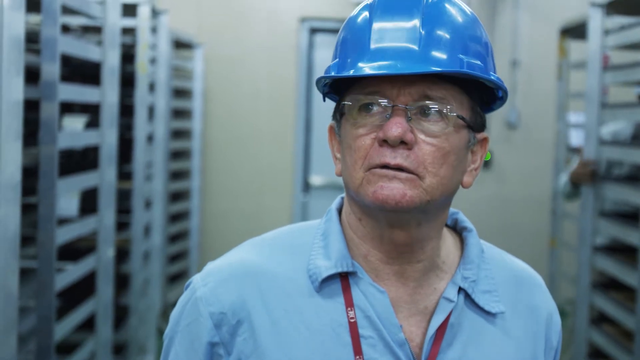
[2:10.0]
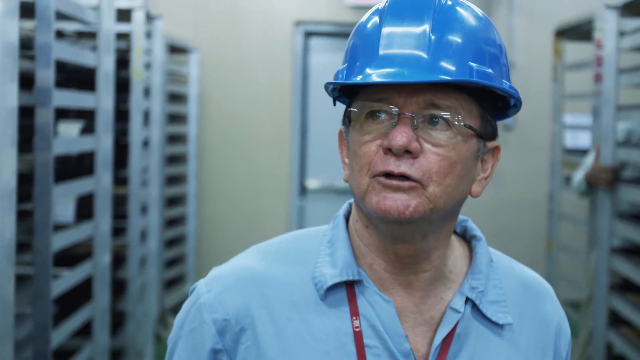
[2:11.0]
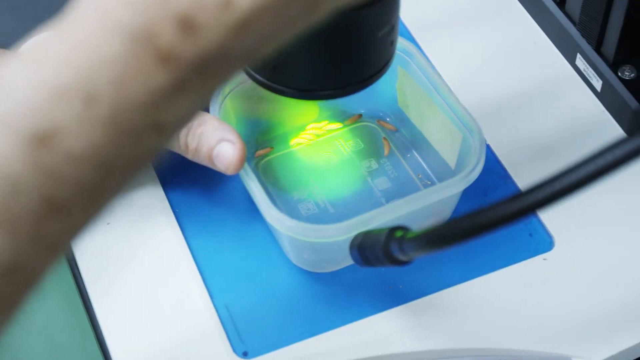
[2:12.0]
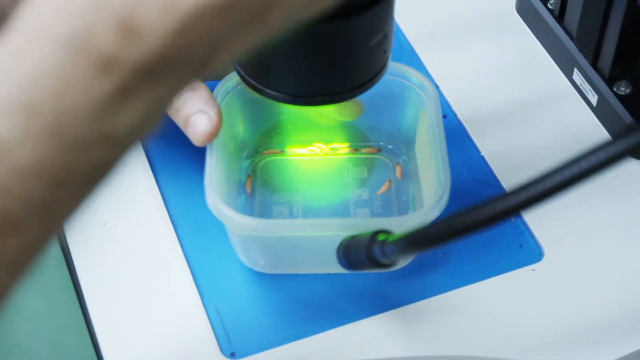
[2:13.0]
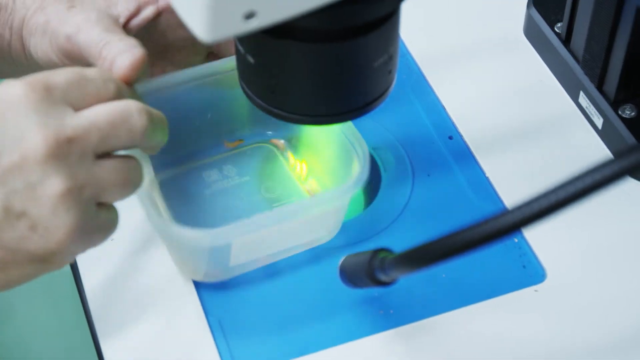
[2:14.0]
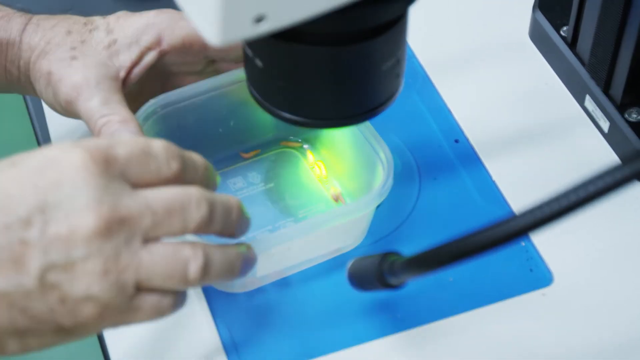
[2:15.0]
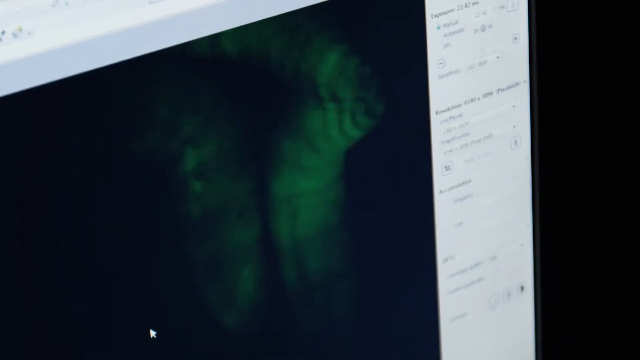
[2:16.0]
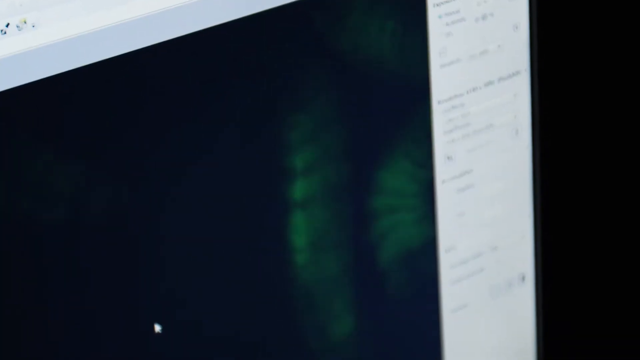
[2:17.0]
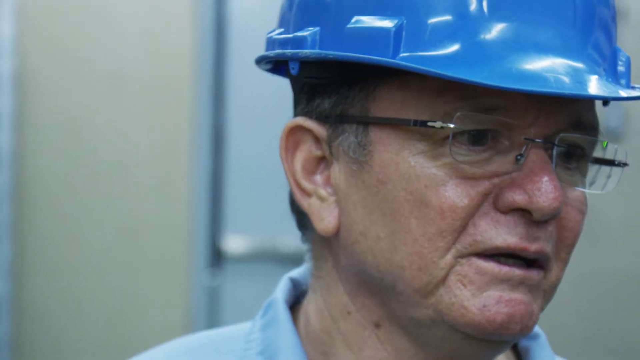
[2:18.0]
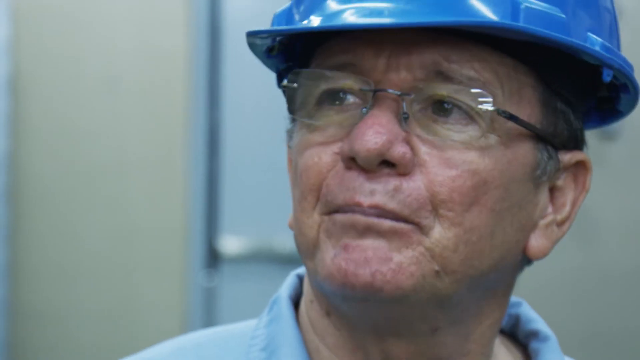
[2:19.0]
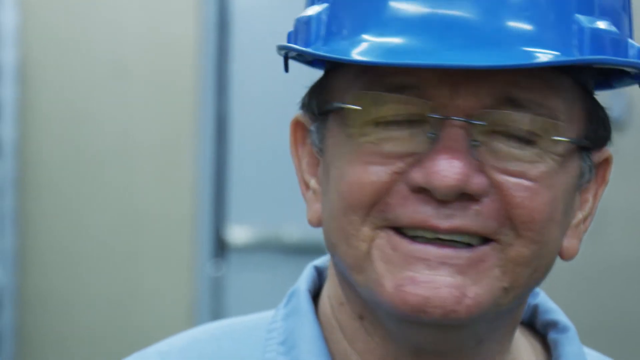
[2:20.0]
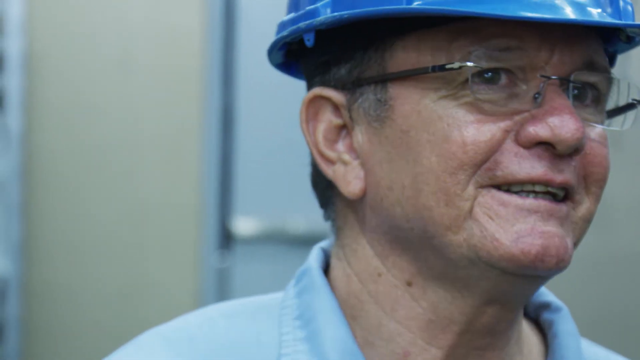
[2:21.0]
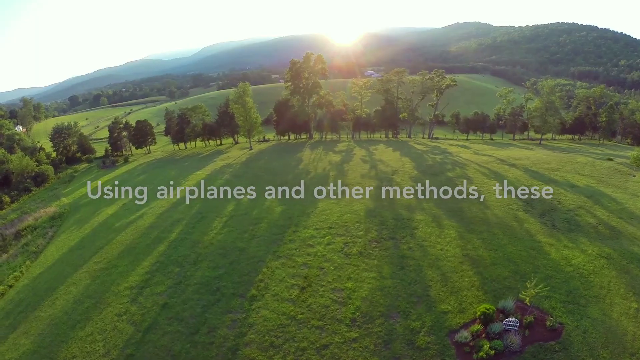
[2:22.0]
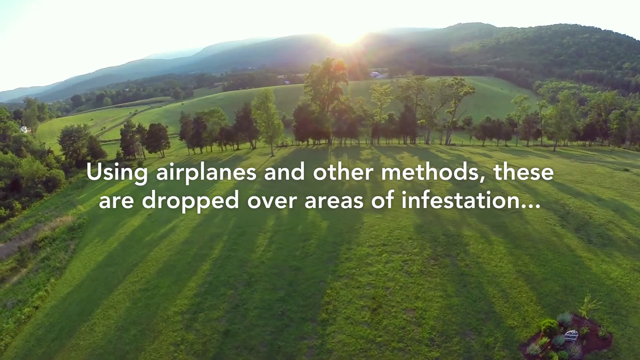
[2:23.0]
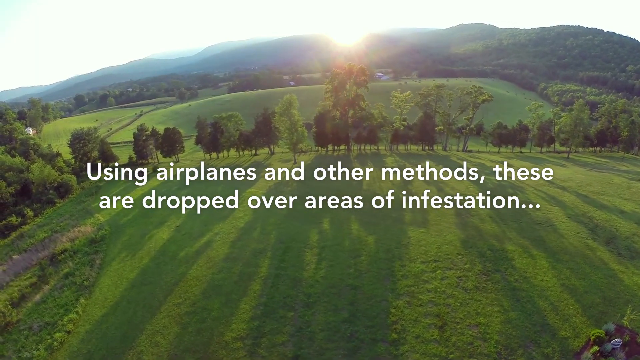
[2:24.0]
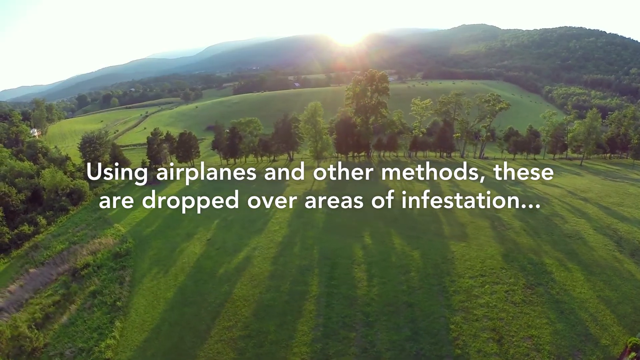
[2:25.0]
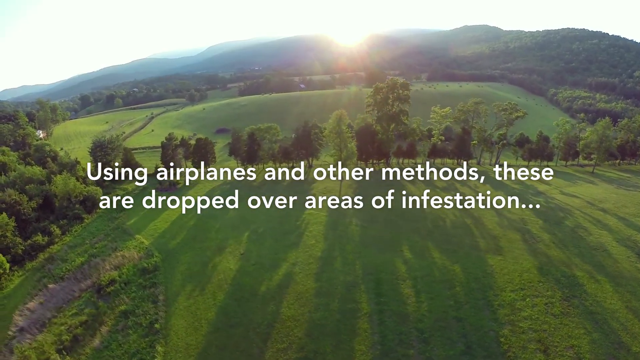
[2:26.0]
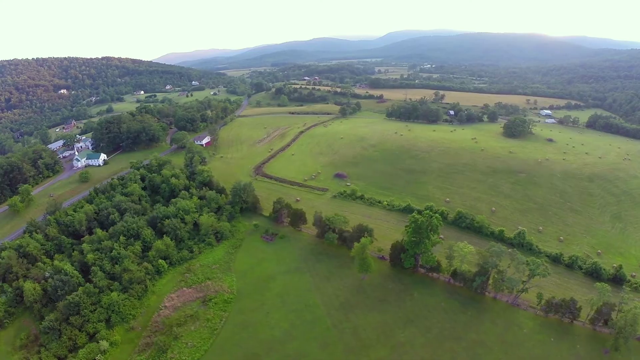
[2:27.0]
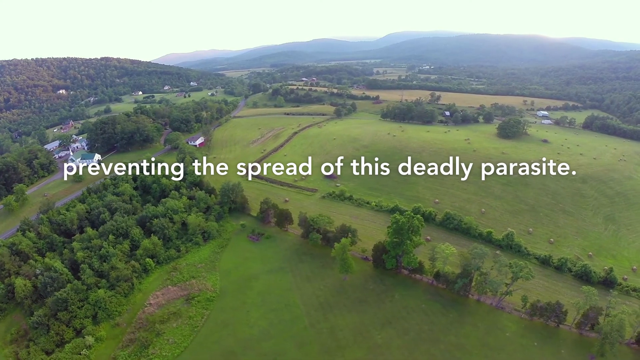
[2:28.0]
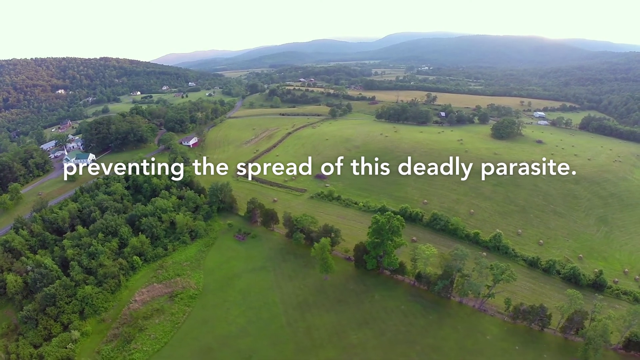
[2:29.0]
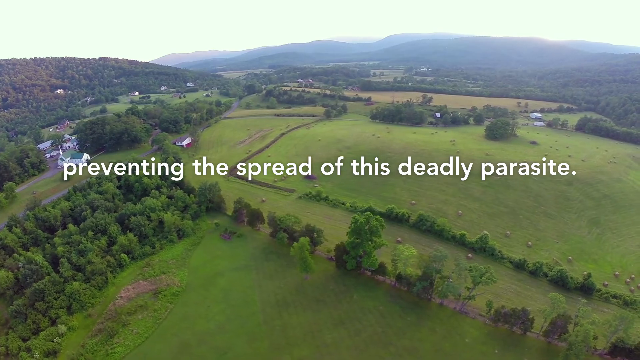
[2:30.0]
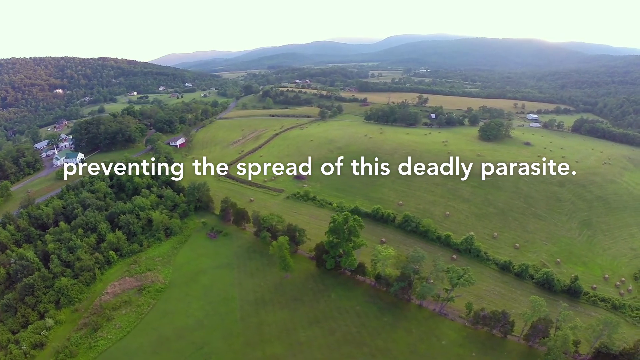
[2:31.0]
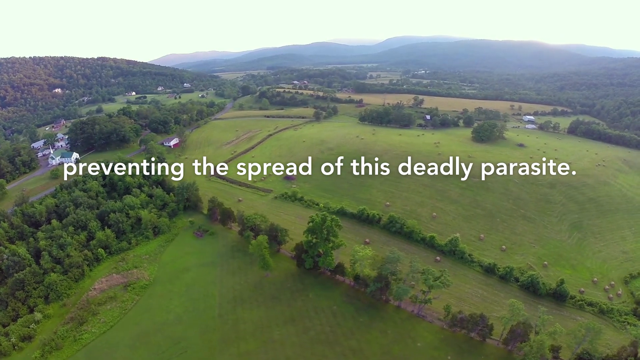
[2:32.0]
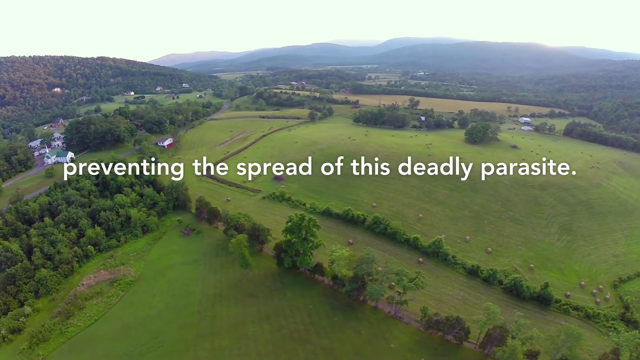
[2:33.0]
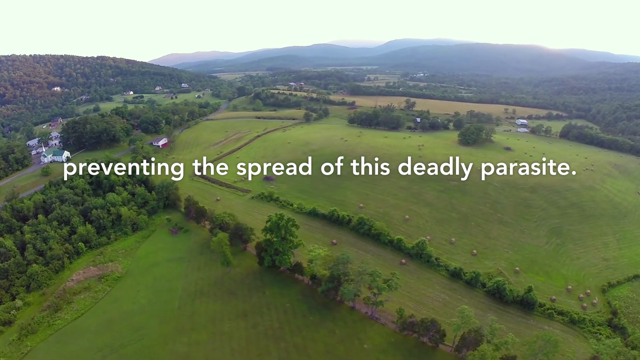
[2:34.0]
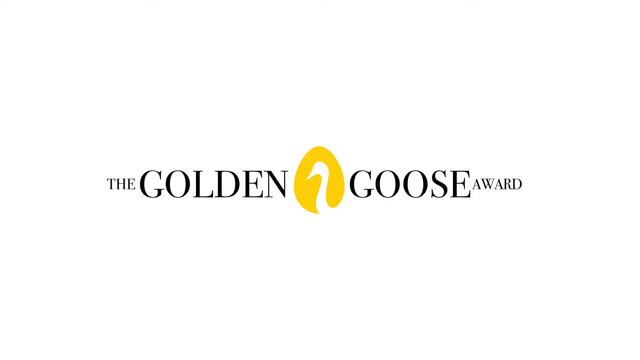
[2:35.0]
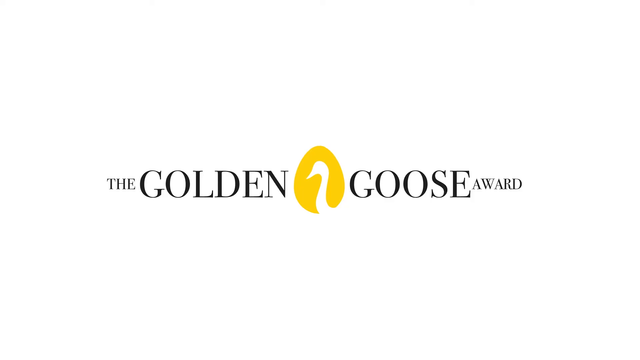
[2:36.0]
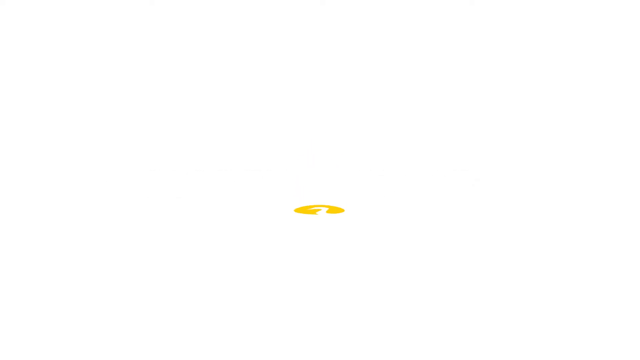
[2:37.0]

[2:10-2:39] A man standing in a laboratory is interviewed on camera. He wears glasses, a blue hard hat, a blue shirt and a red lanyard around his neck, and he speaks into the camera. The camera then focuses on a clear plastic bin being looked at through a microscope, with a light shining down on it; there appear to be a few tiny larvae inside. Two hands move the bin around slightly underneath the light. The camera returns to the man as he continues speaking into the camera. After he finishes, an outdoor shot shows a large empty field surrounded by trees, with white text on the screen reading "using airplanes and other methods, these are dropped over areas of infestation preventing the spread of this deadly parasite." The video then ends as the Golden Goose Award logo comes back into focus on the screen.